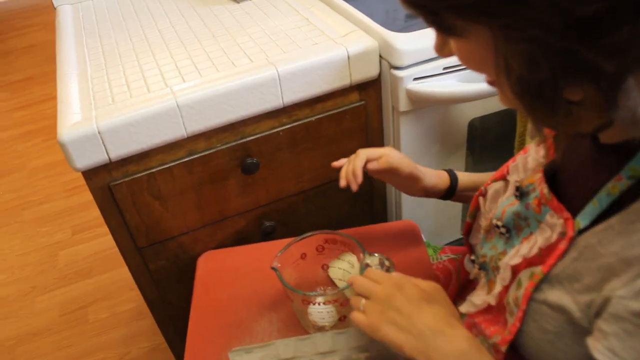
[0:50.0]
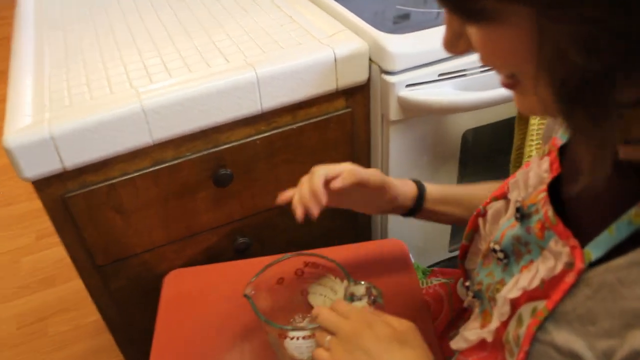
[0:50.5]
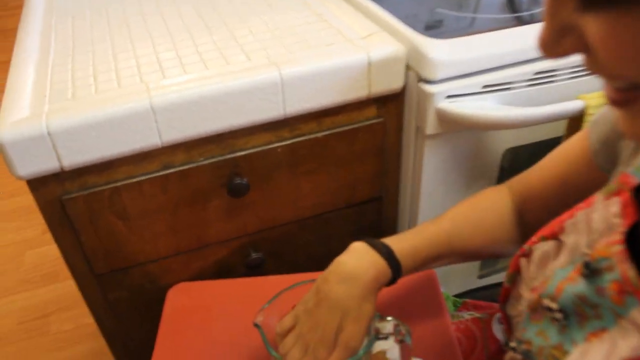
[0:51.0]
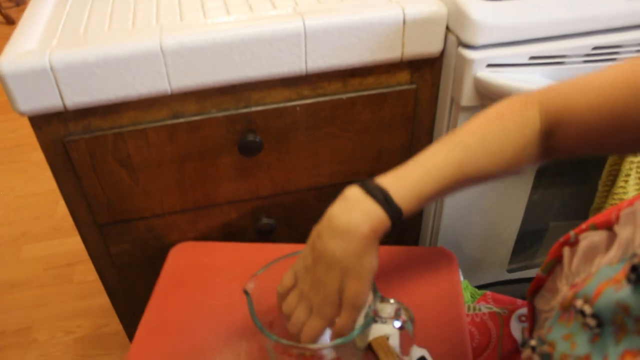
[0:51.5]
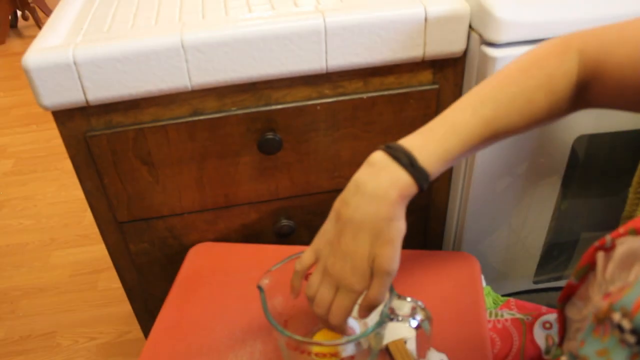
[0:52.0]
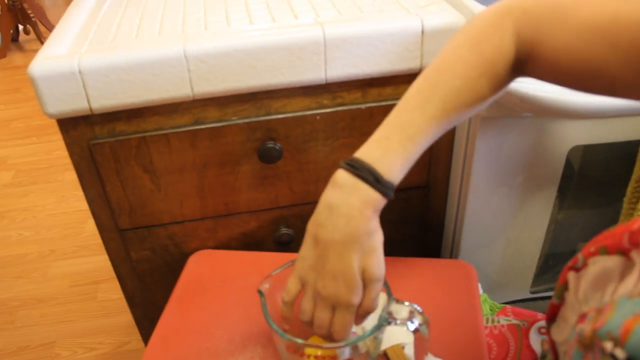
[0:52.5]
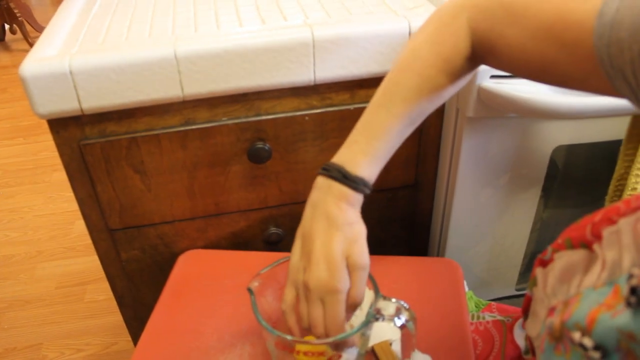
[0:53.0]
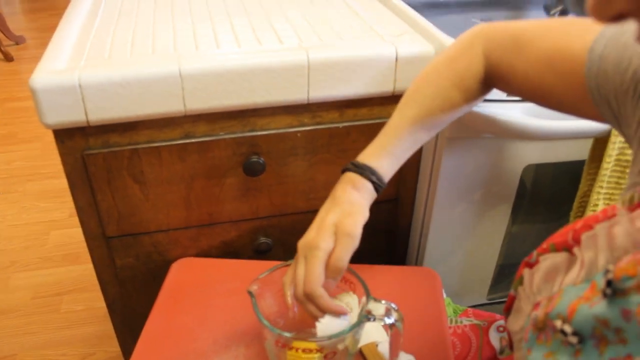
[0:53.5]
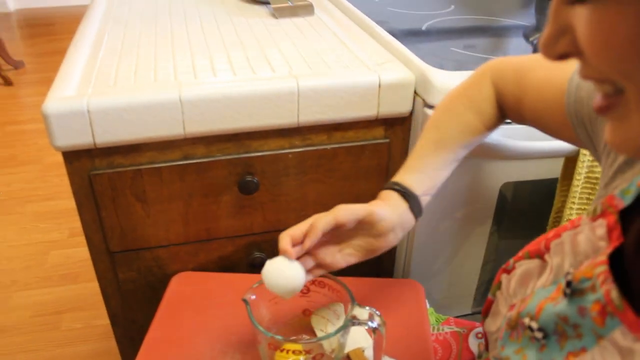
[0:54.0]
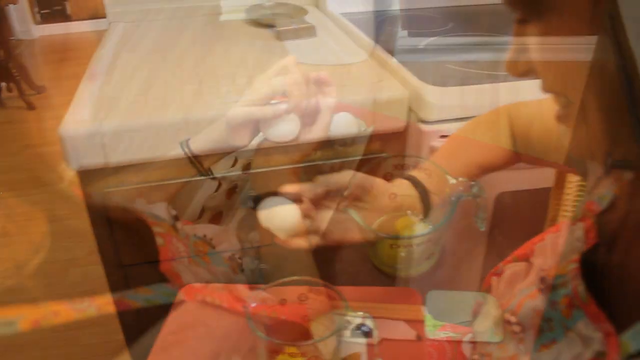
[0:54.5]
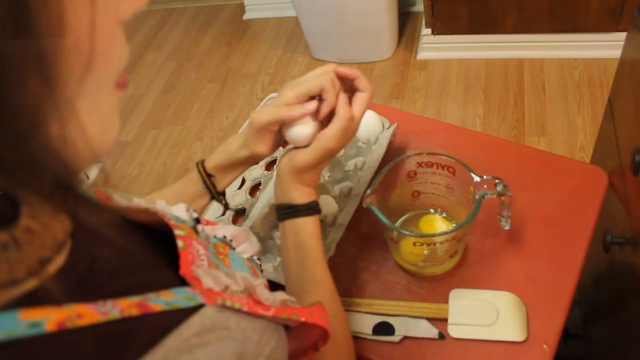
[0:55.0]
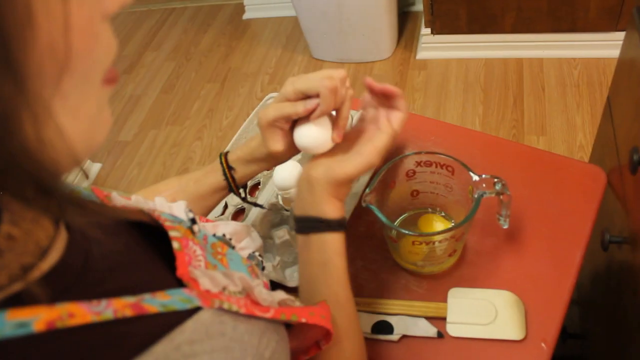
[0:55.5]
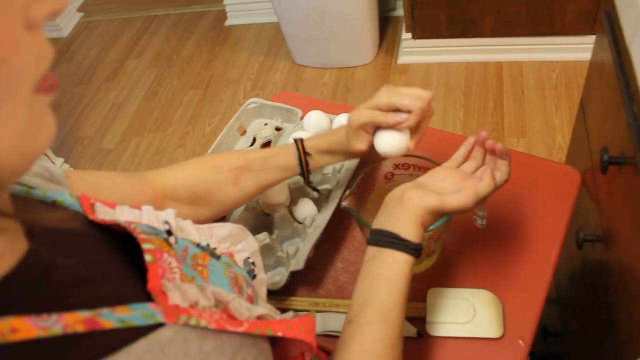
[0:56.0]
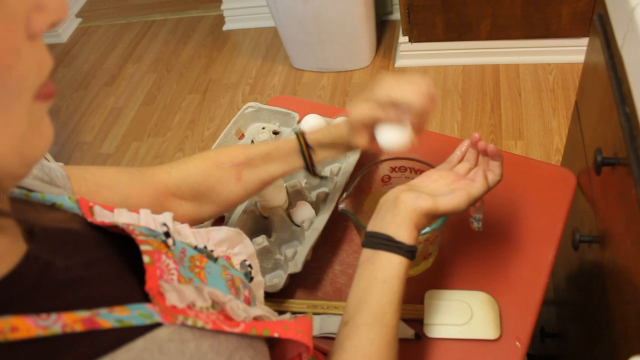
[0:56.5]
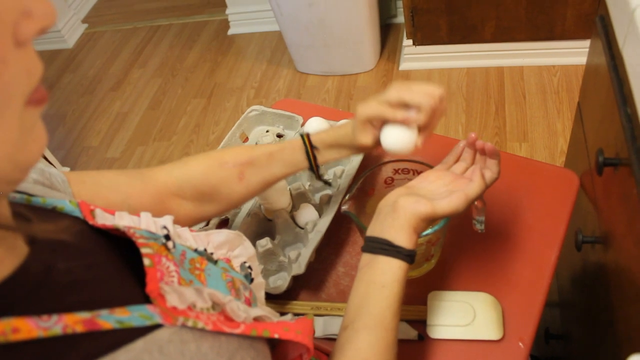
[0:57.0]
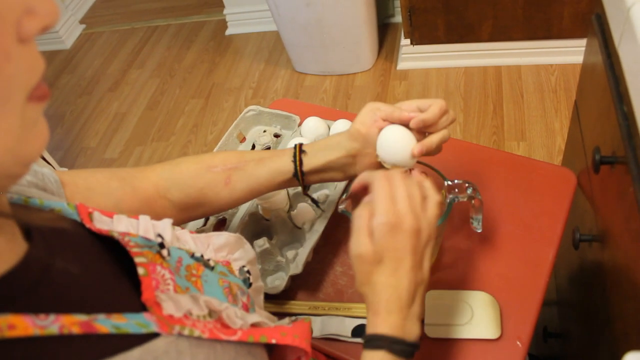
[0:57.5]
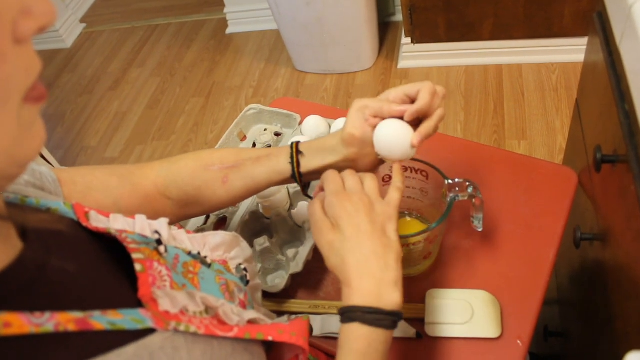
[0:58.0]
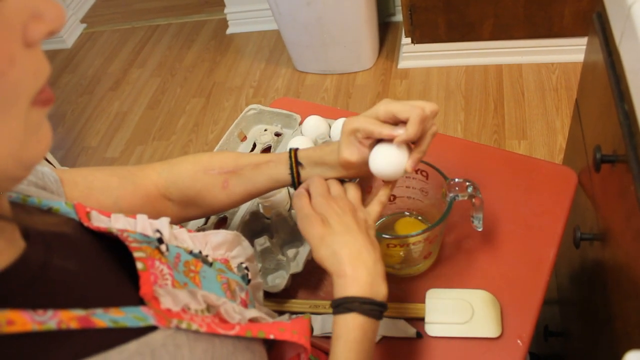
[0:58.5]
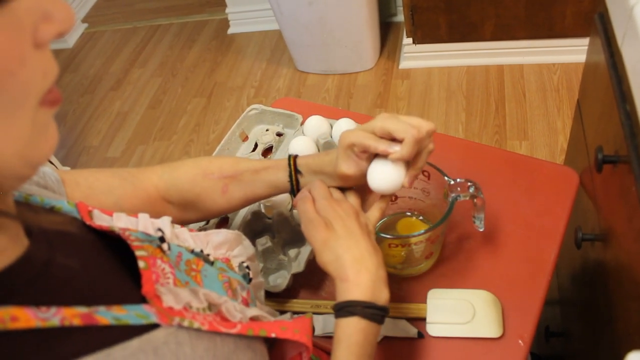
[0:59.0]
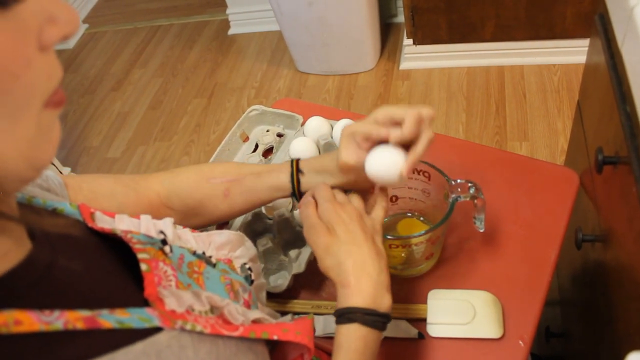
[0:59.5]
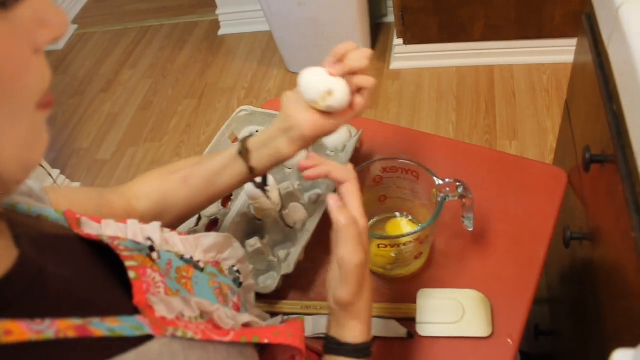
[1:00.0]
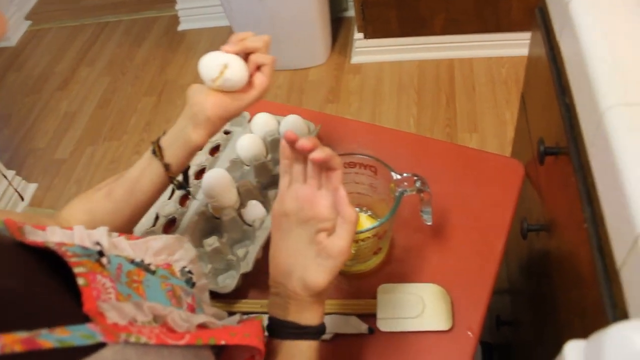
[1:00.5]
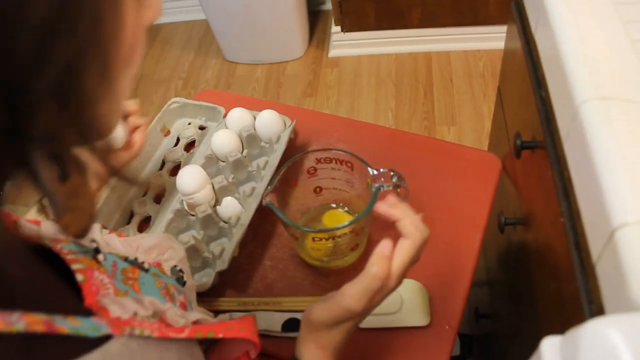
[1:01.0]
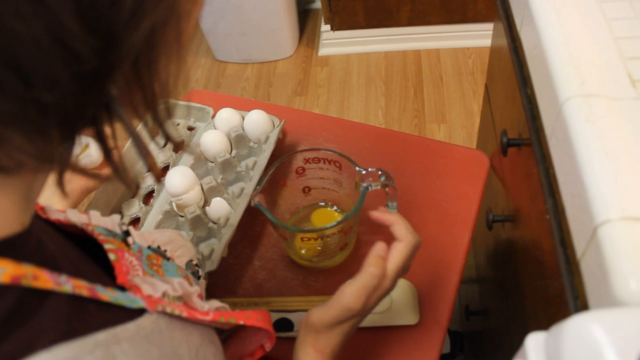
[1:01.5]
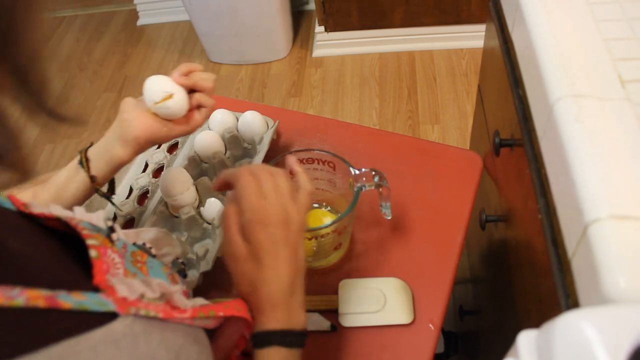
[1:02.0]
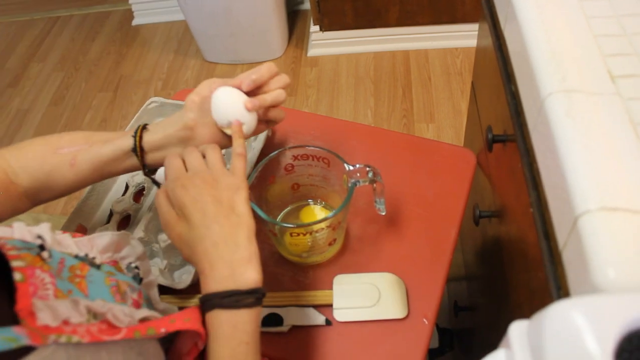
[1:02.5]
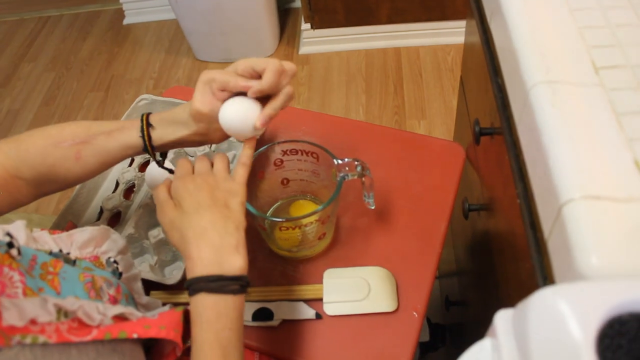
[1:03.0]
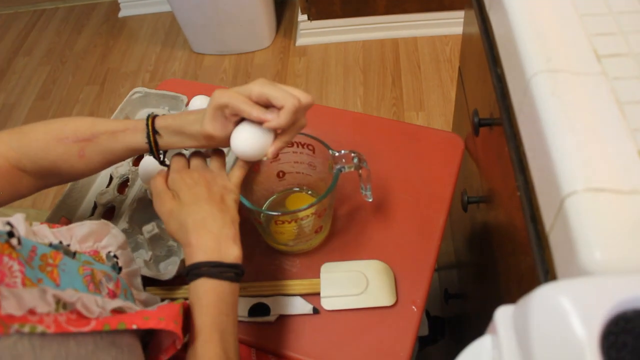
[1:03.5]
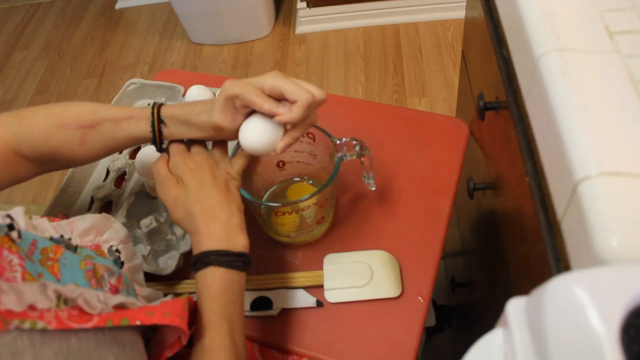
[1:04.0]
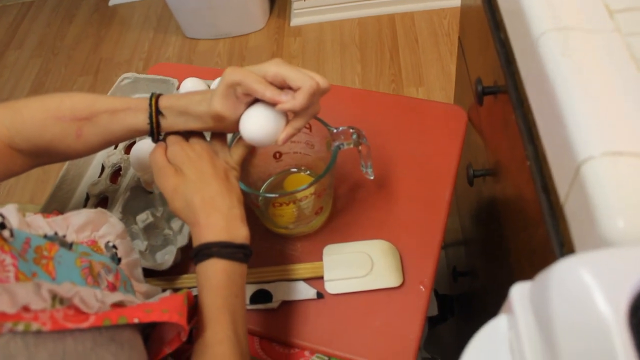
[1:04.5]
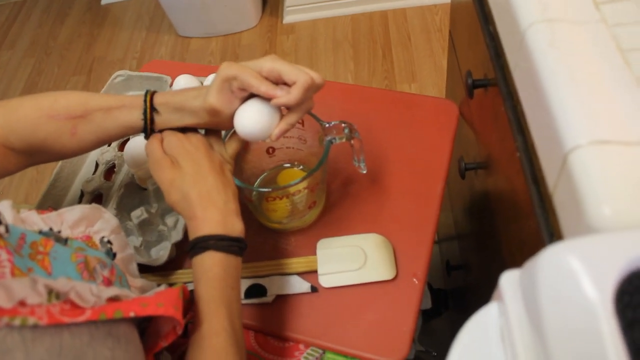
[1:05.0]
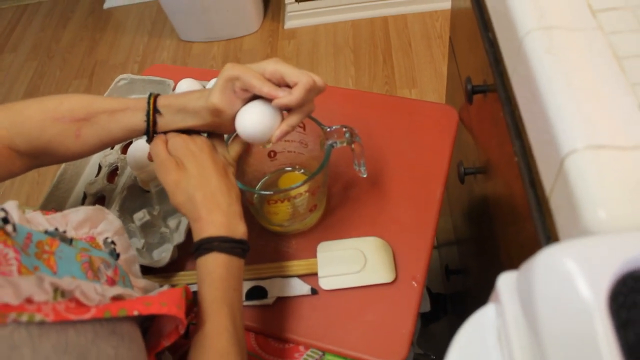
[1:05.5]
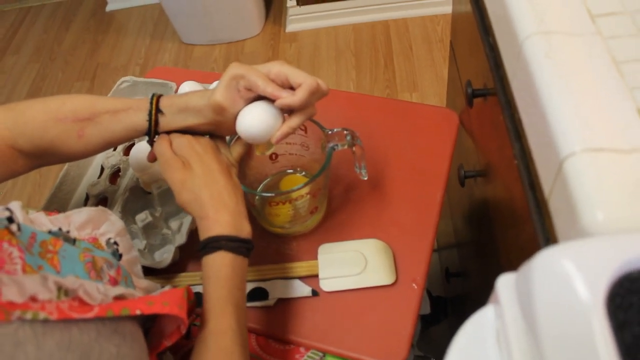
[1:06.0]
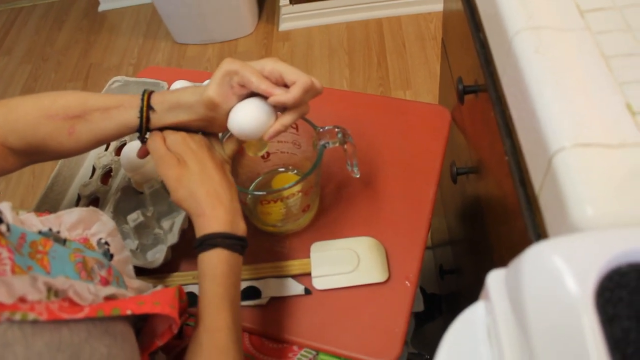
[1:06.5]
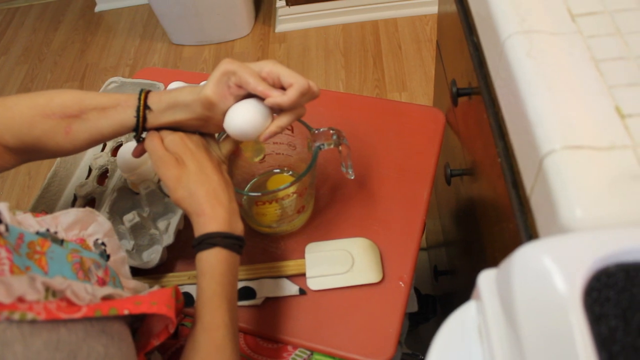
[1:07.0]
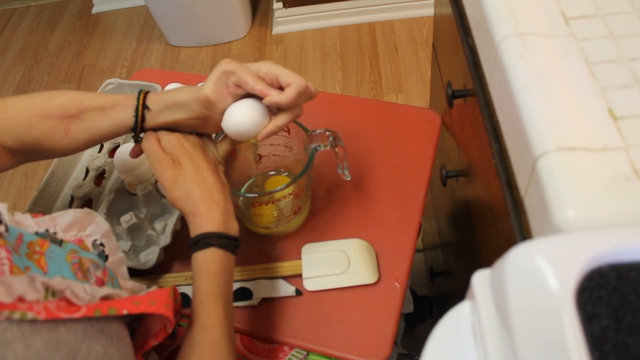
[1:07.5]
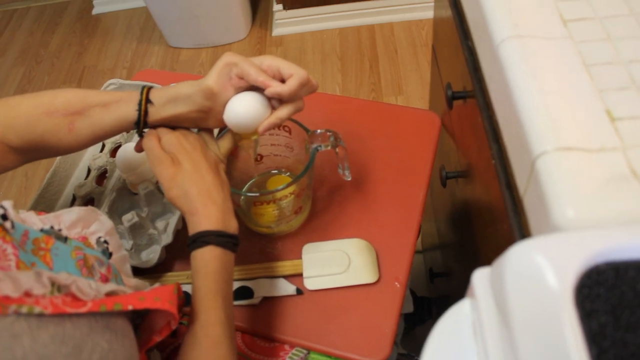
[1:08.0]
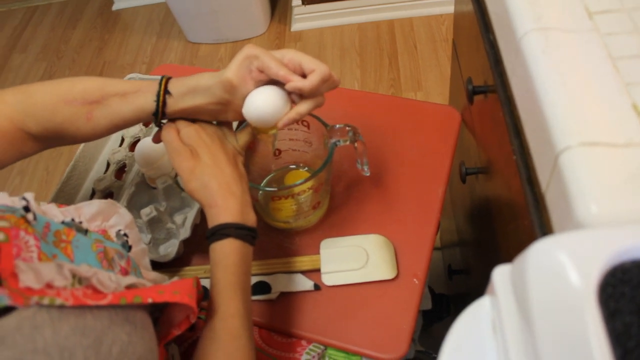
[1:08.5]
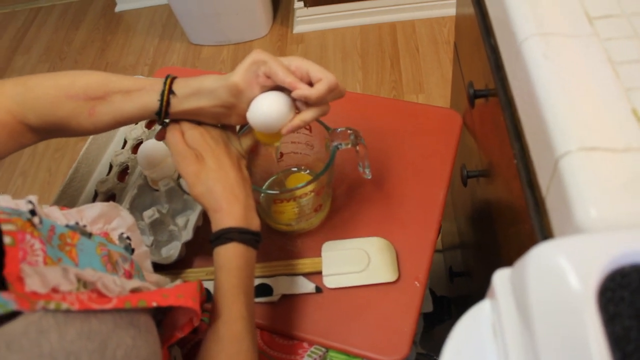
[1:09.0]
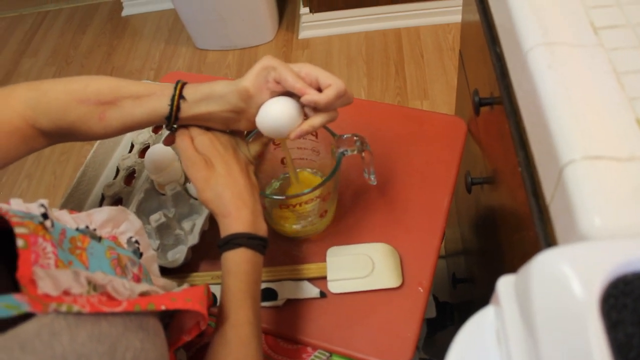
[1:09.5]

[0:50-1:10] The woman talks to the camera and uses her right hand to scoop the shell out of the measuring cup, removing it fairly easily. The video transitions to a different angle in the same spot in the kitchen, with the camera angled near her right shoulder, giving almost an aerial view of what she is doing. She grabs another egg, cracks it on the measuring cup, and uses the pinky of her right hand to make a bigger hole in the egg. She keeps putting her pinky in the egg until the yolk and white come out, and eggshells fall into the measuring cup. She puts her hand in the cup.